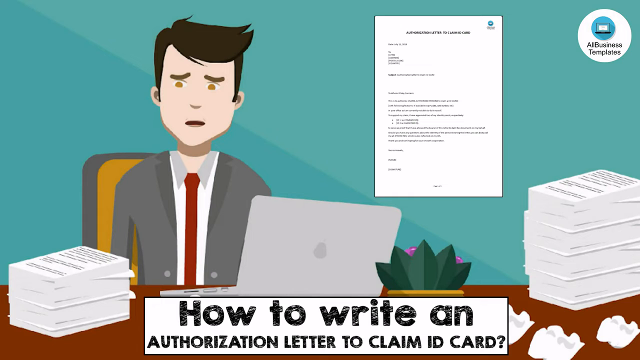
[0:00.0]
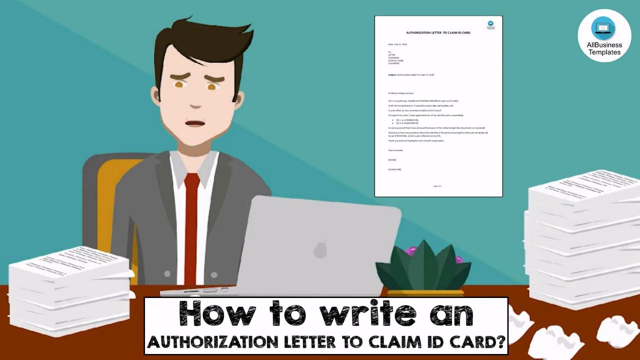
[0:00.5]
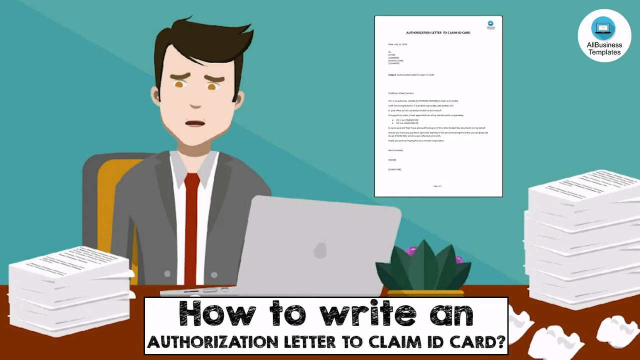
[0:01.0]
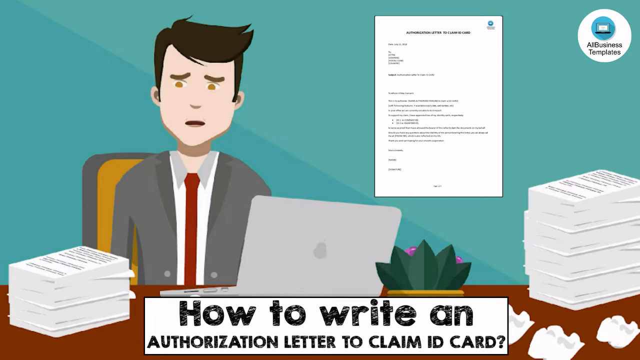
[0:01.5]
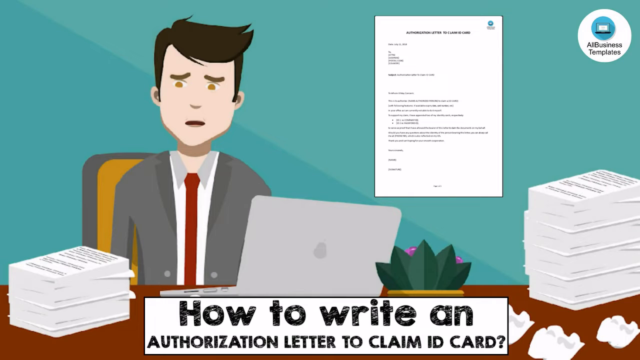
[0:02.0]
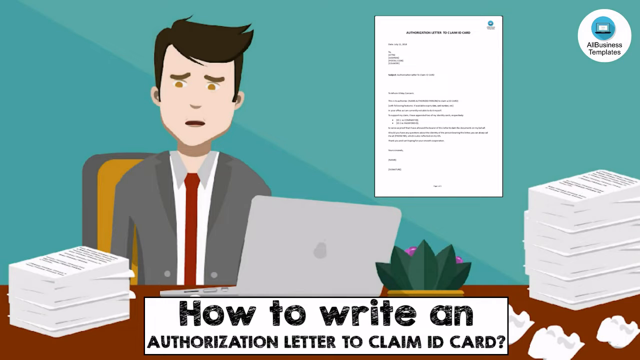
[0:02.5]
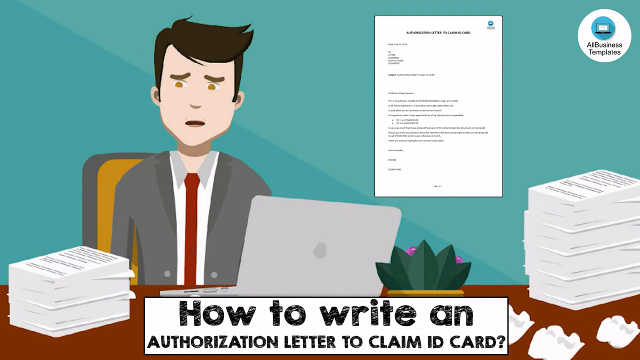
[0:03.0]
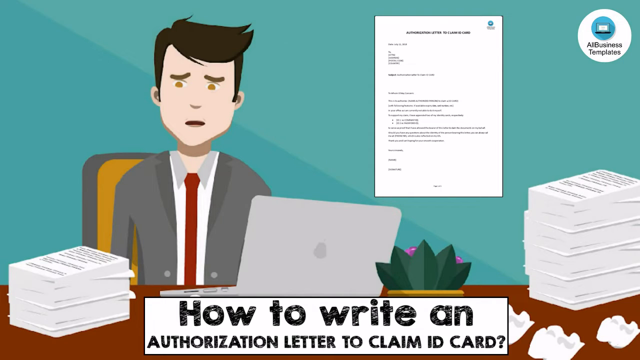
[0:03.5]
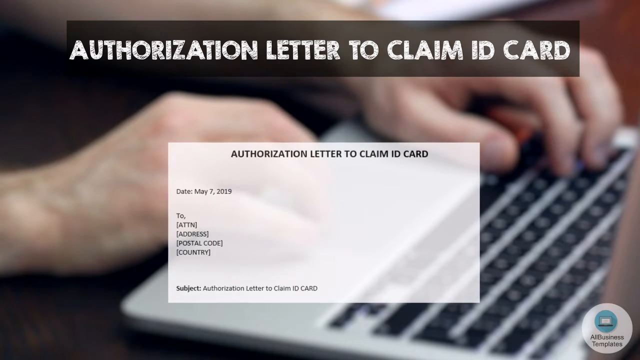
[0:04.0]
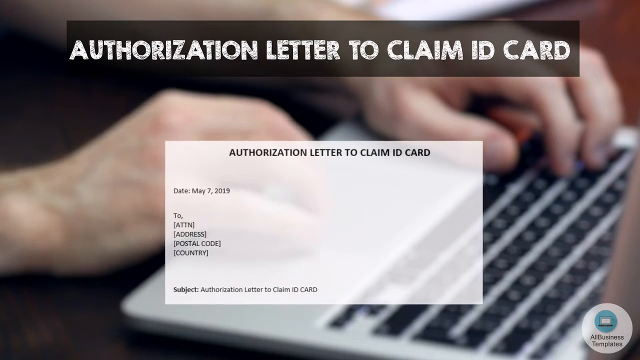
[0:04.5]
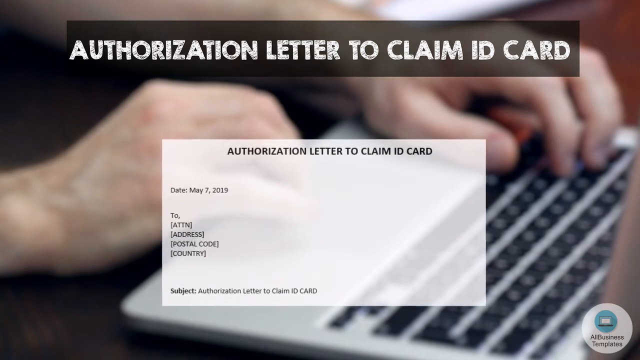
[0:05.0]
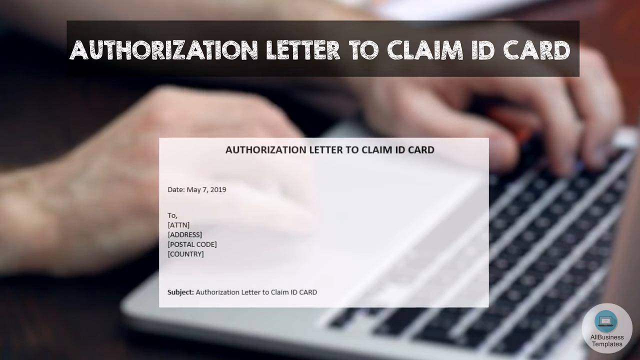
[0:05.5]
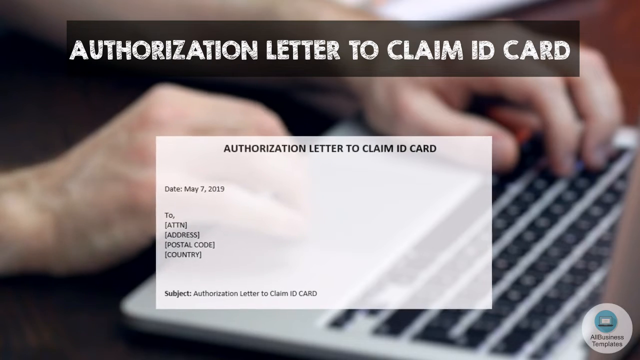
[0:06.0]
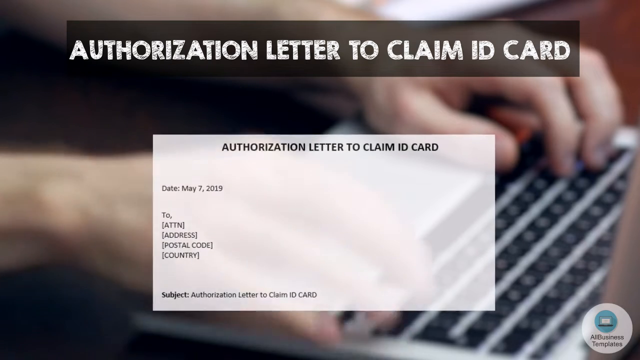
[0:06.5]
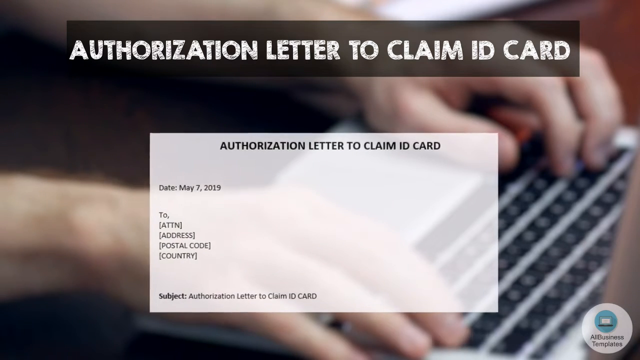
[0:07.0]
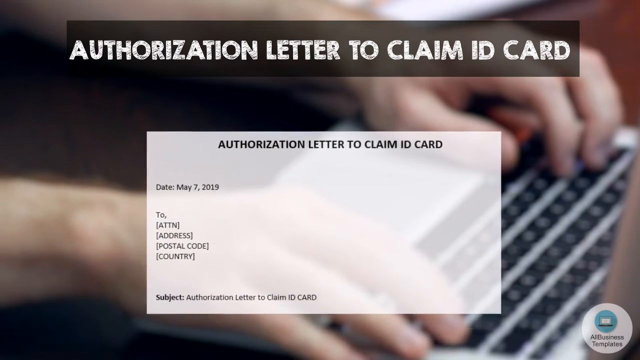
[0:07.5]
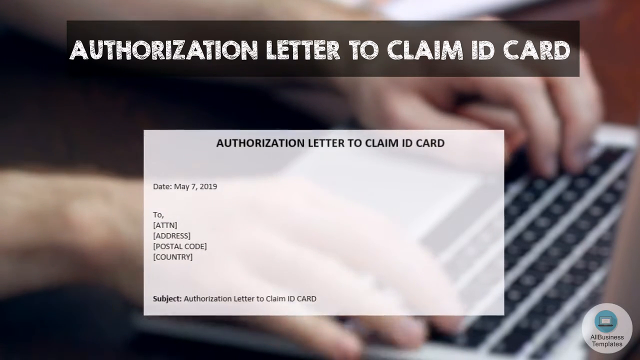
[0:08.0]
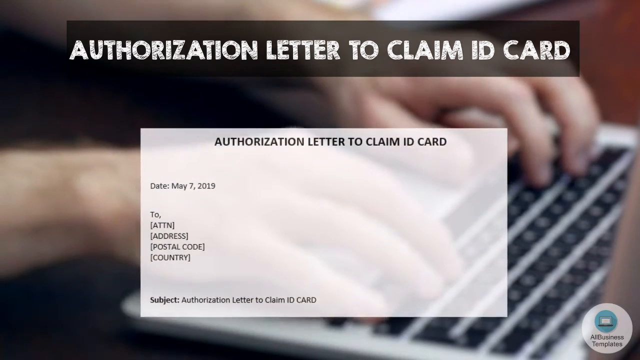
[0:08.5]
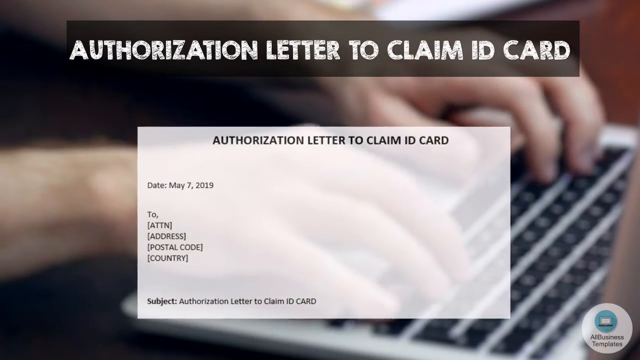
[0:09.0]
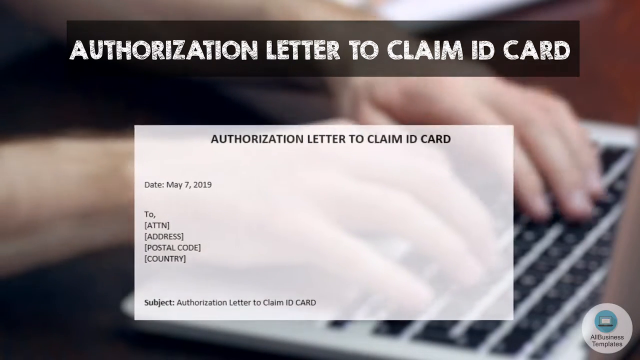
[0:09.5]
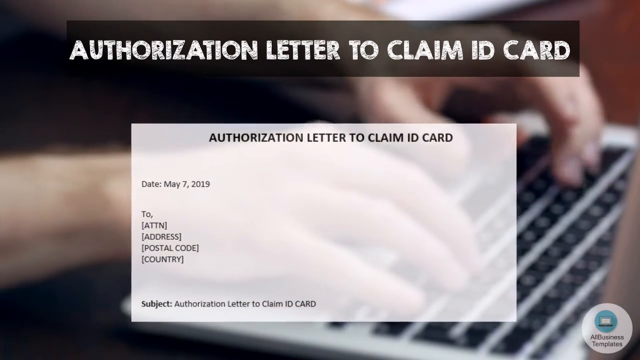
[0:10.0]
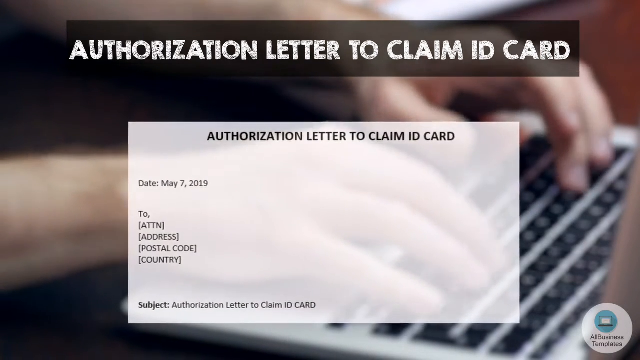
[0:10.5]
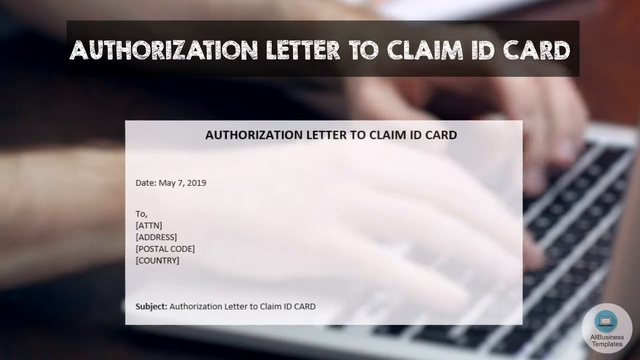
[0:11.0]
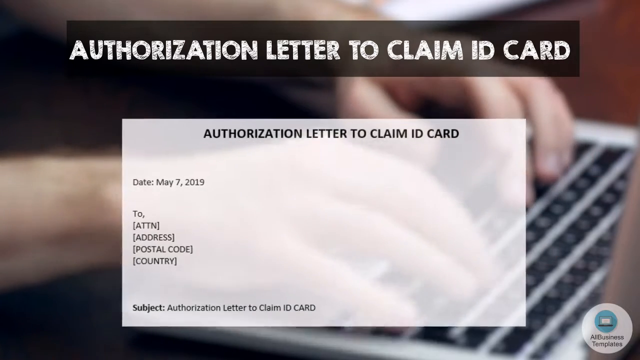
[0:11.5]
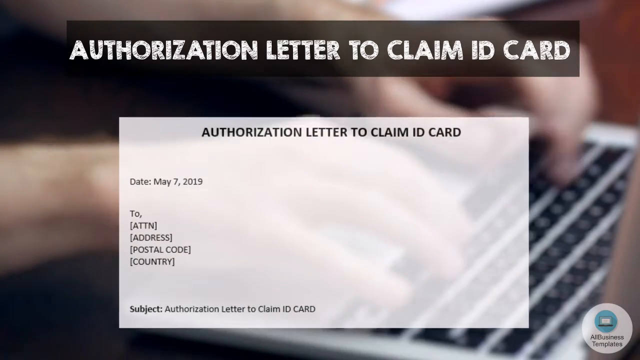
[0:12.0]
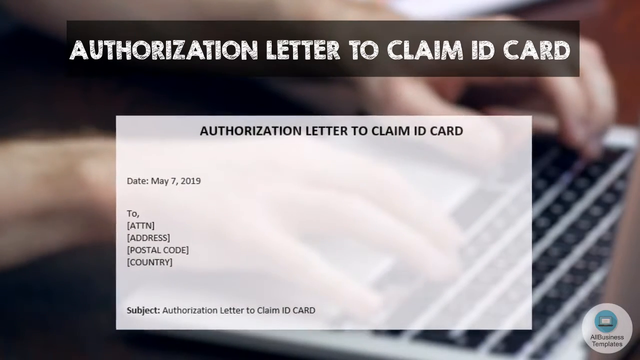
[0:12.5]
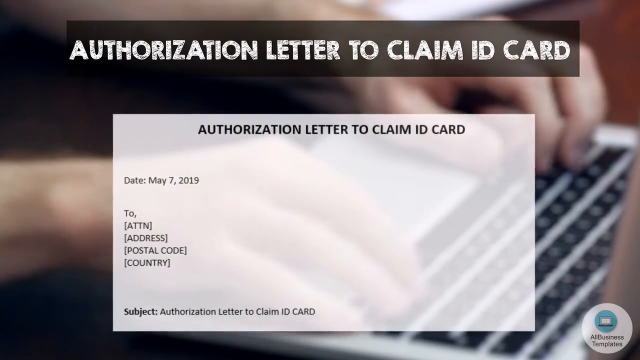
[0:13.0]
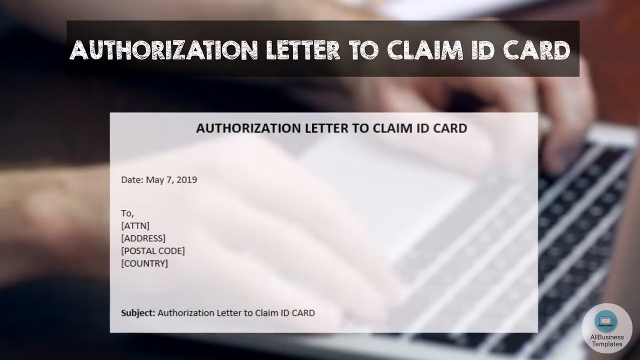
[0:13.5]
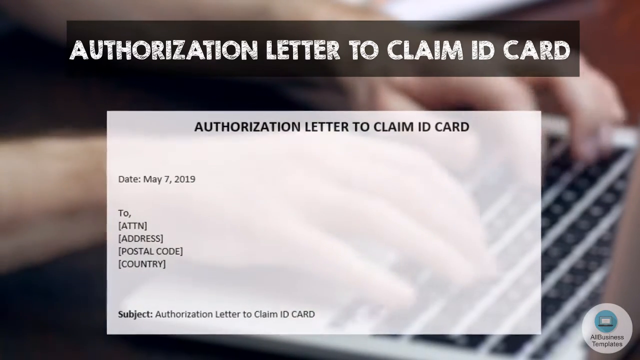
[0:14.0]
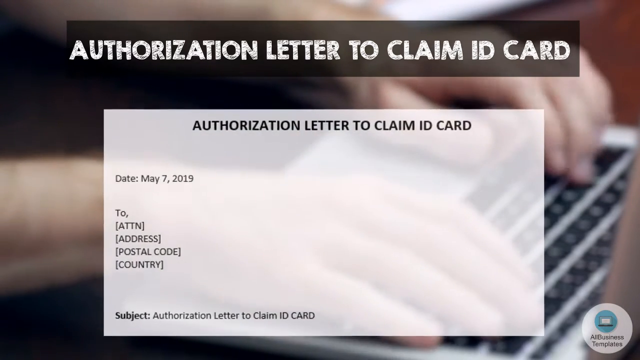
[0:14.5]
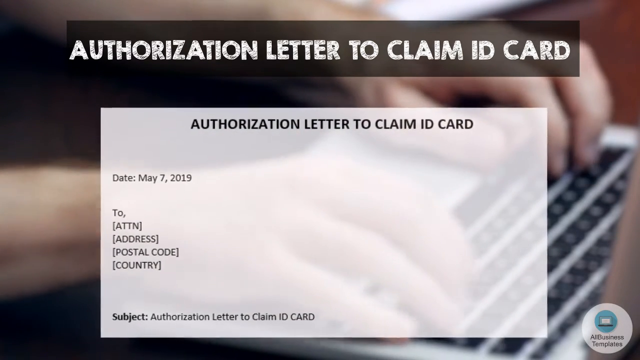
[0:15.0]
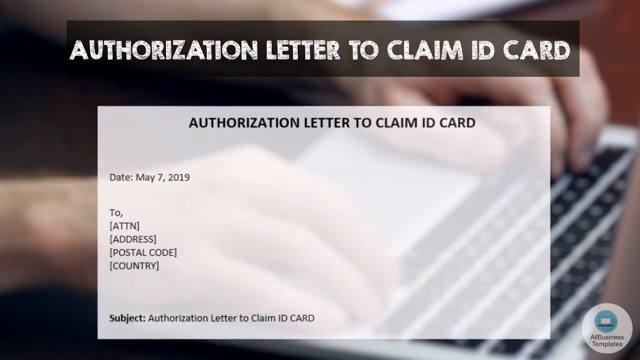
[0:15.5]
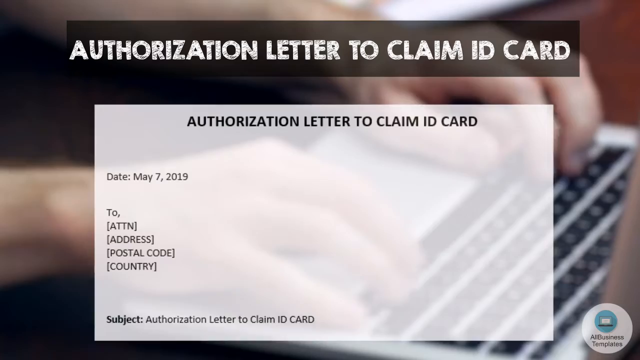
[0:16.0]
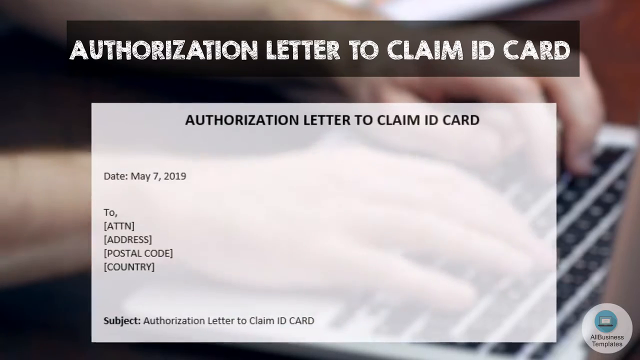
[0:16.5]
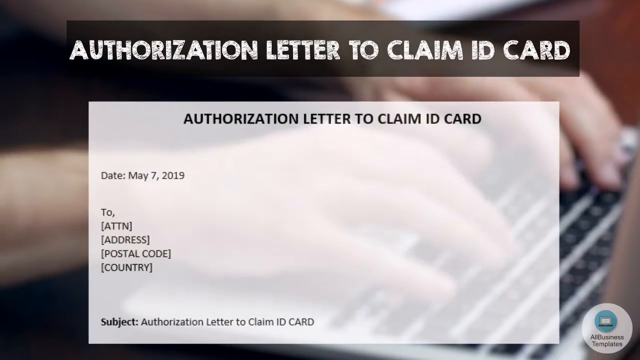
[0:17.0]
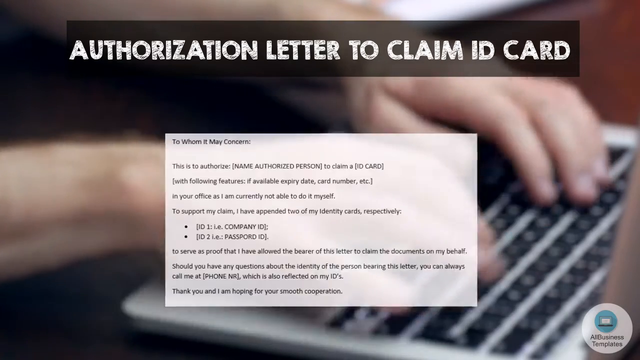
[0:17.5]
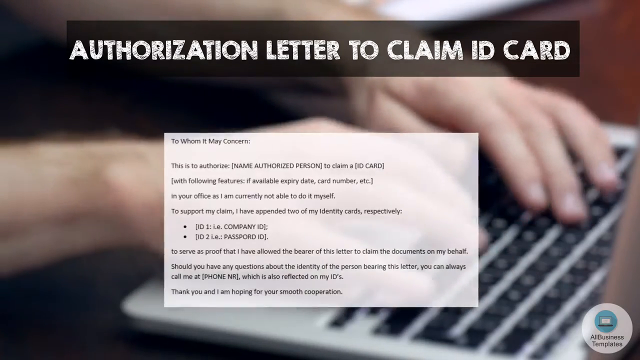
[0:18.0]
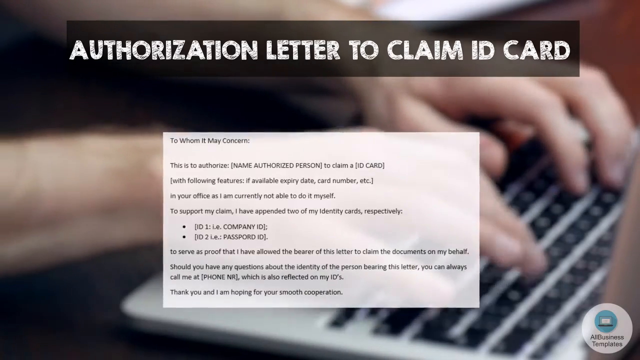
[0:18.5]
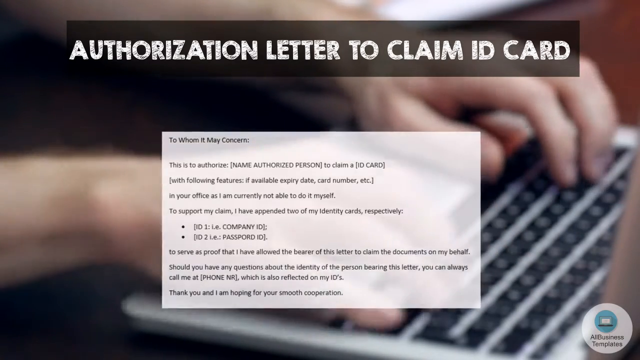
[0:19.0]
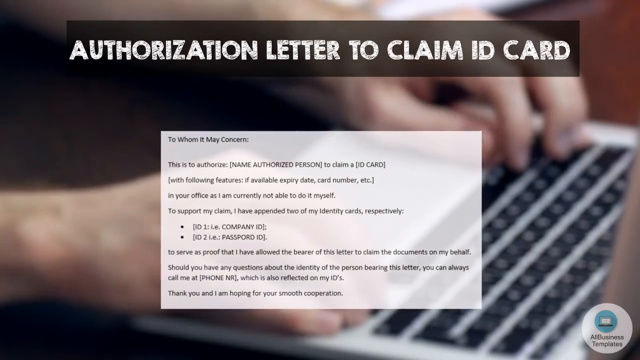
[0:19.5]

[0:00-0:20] A man sits in an office in front of a laptop, with paperwork on his left and on his right. A letter appears behind him or to his right, in the upper right corner of the screen, reading "AI business template." There is a plant next to the computer. At the bottom of the screen, text reads "how to write an authorization letter to claim ID card." The scene then shifts to real hands typing on a laptop keyboard, with "authorization letter to claim ID card" at the top. In the center of the screen, a transparent card reads "authorization letter to claim ID card" and "date May 7th, 2019." Beneath that, a series of words in brackets reads "to," then "ATTN," then "address," then "postal code," and then "country." At the very bottom of the card is "subject. Authorization letter to claim ID card." The card keeps getting bigger on the screen while the person can still be seen typing on the laptop in the background. The AI business templates logo is in the bottom right corner. Then "to whom it may concern" appears in the center of the screen, along with more text.